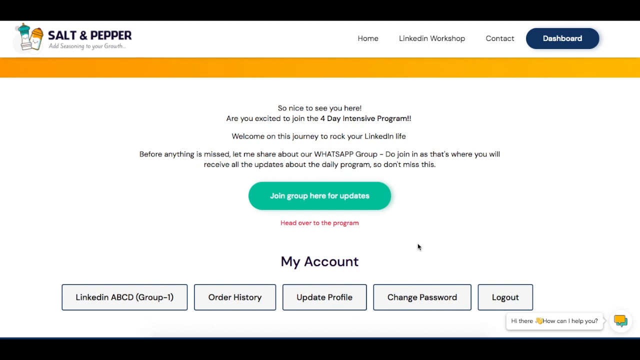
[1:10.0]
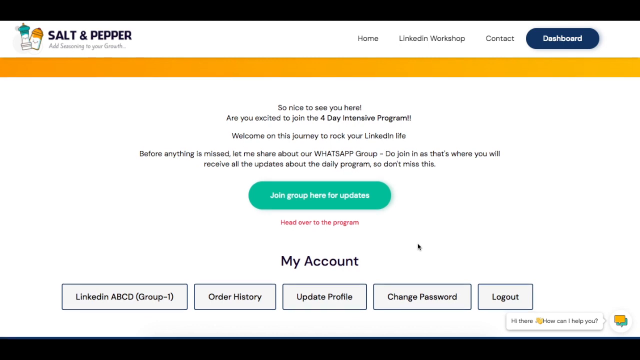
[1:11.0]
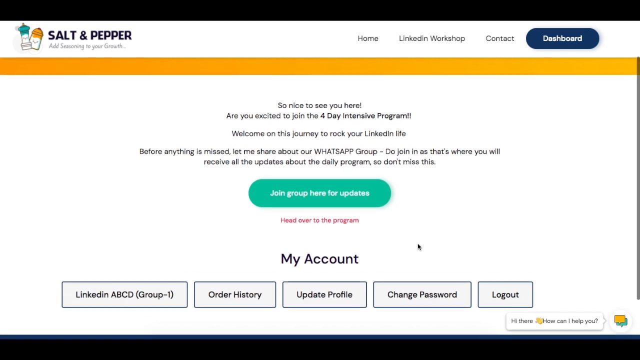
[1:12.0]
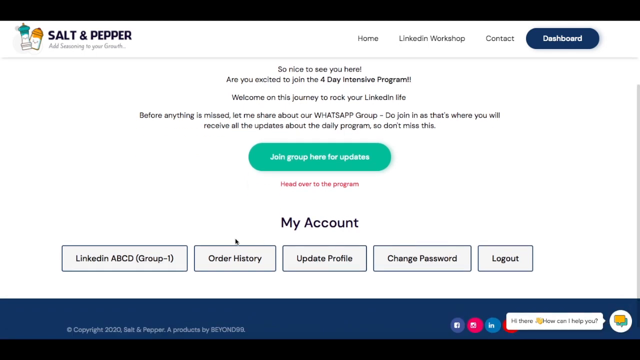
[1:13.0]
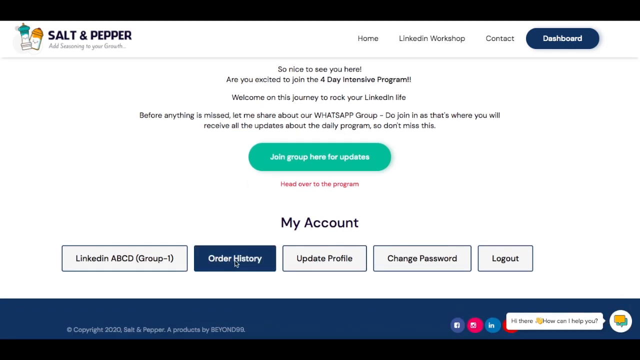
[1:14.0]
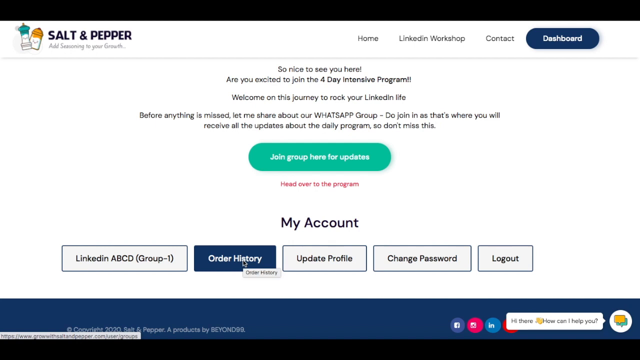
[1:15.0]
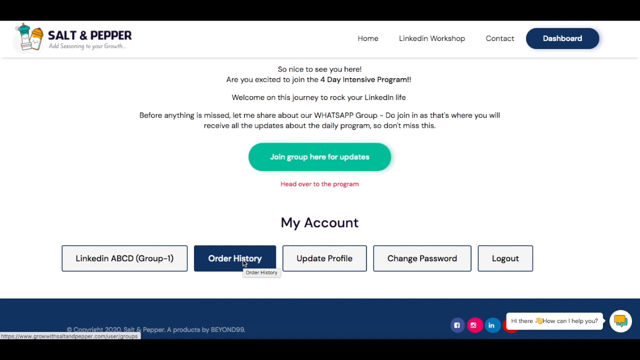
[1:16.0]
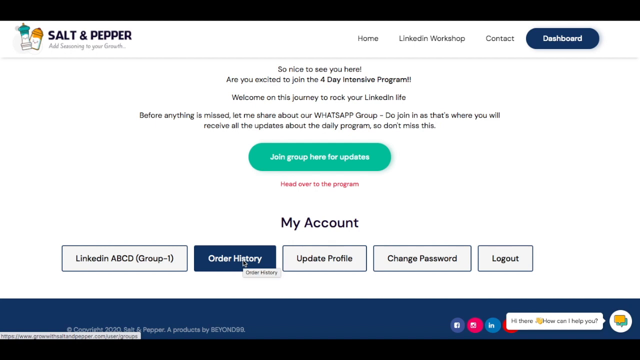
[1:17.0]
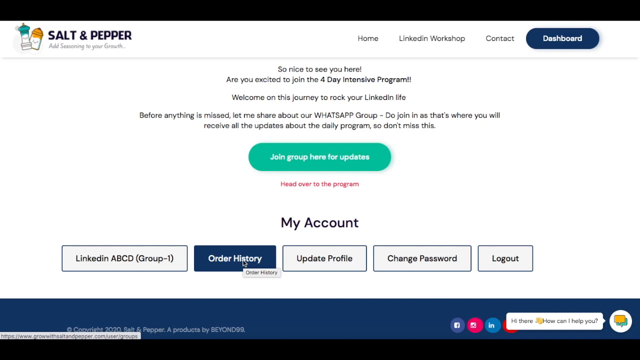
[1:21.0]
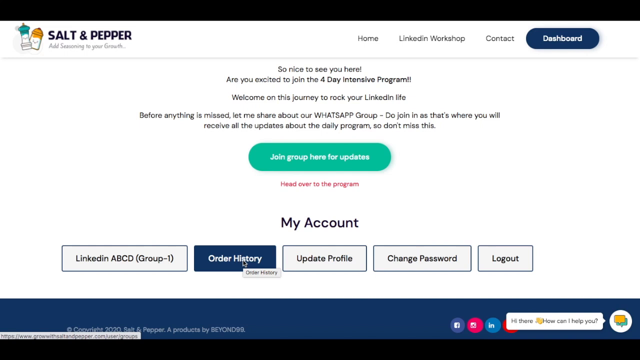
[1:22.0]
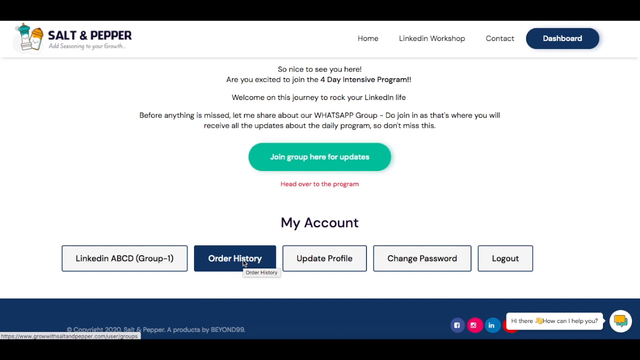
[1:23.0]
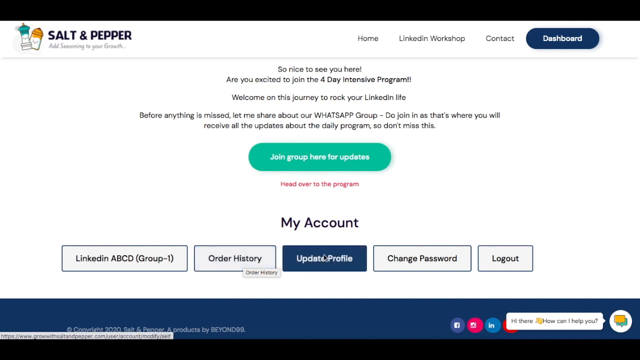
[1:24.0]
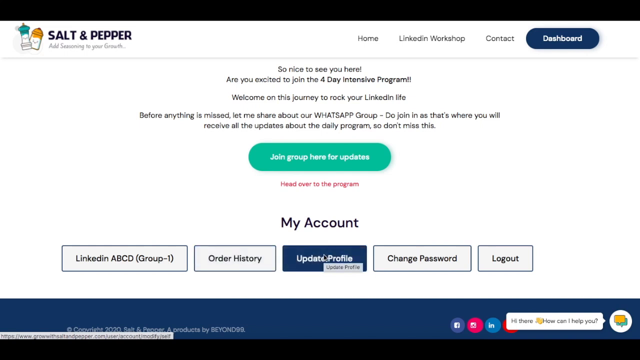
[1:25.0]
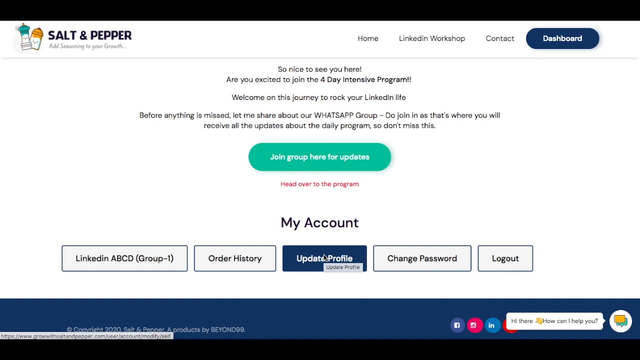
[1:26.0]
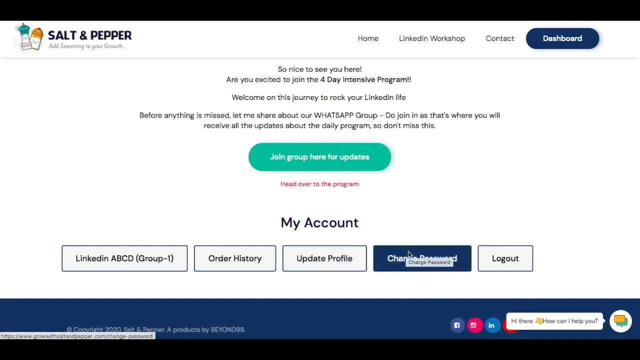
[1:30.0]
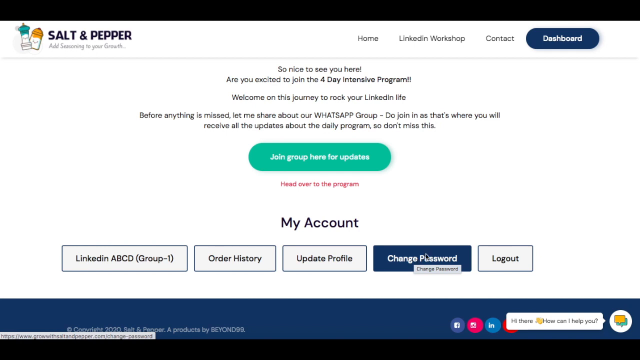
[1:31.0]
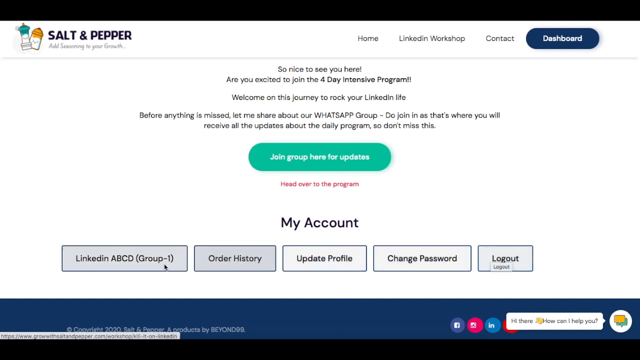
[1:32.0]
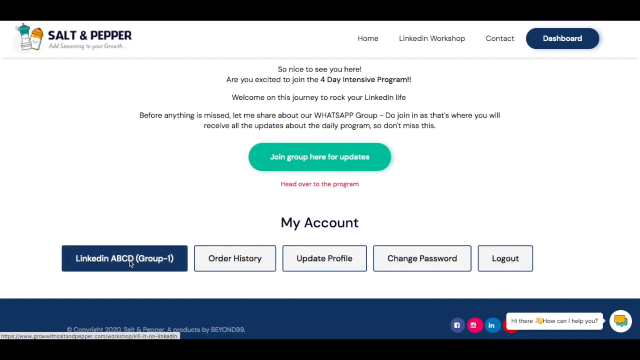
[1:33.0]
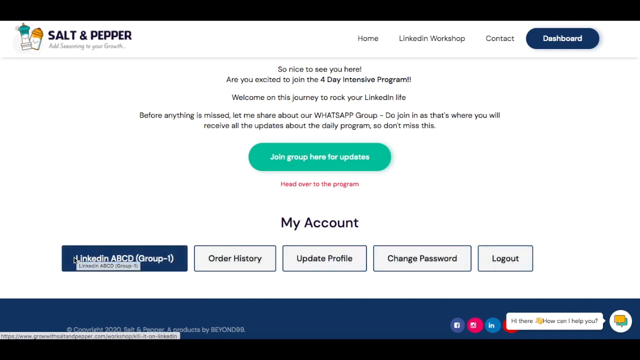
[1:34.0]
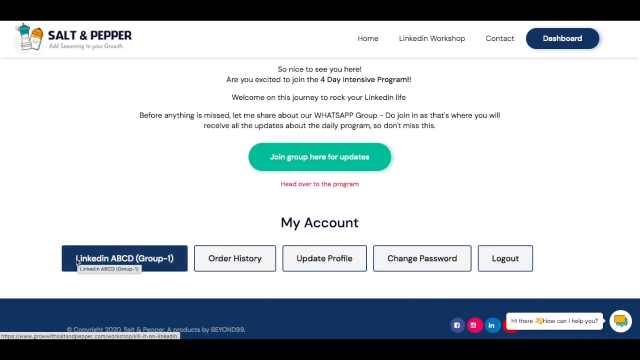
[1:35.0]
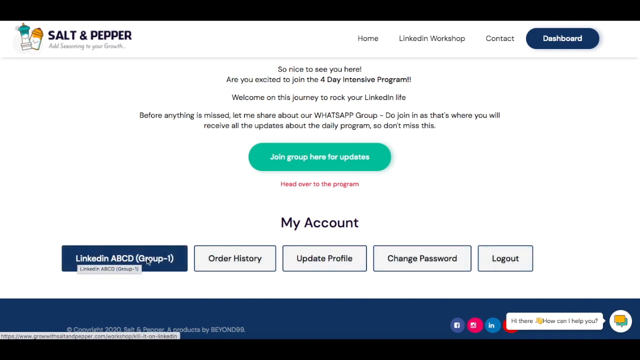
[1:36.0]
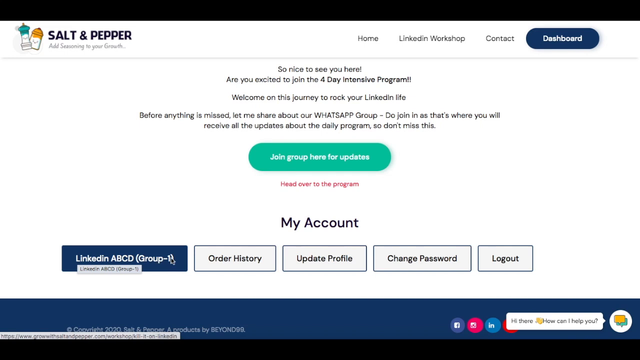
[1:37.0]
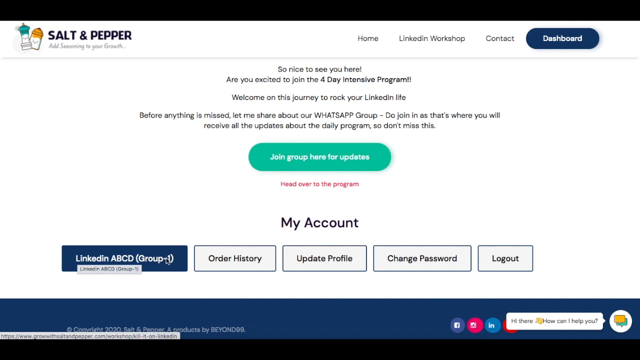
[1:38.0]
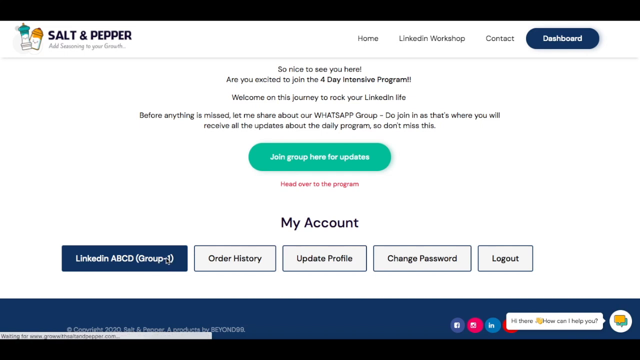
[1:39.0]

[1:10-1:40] A section toward the bottom of the dashboard page is titled "My Account." Below the title are five clickable boxes reading "LinkedIn ABCD Group 1," "Order History," "Update Profile," "Change Password," and "Log Out." The cursor lands on the Order History button, which highlights blue briefly. The cursor then moves right to the Update Profile button, highlighting it, then to the Change Password tab, then to the Log Out button, and finally back to the left, highlighting the first box, "LinkedIn ABCD Group 1." The cursor clicks the first box, which opens the landing page for the class.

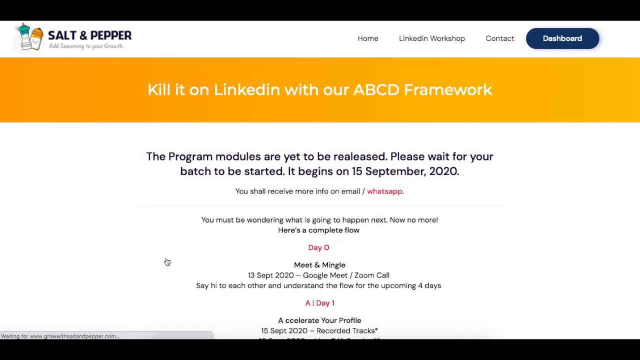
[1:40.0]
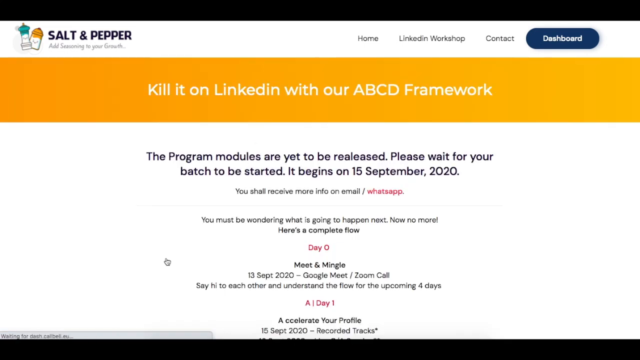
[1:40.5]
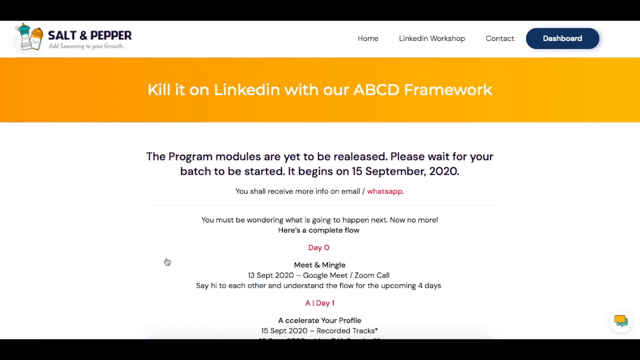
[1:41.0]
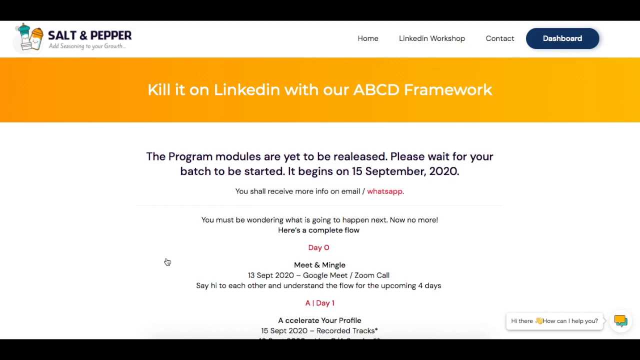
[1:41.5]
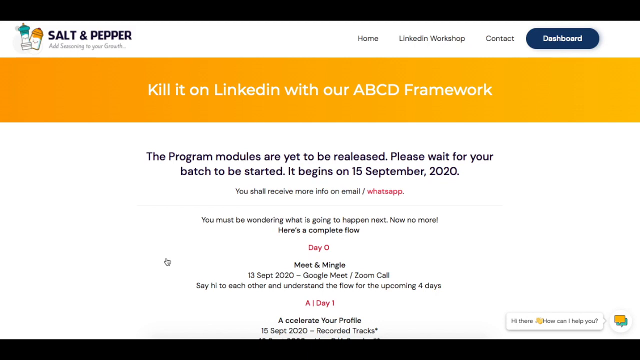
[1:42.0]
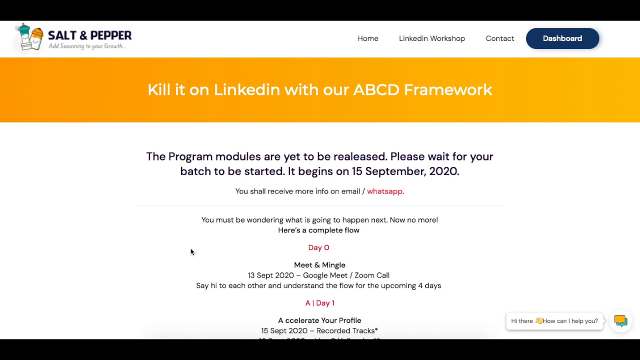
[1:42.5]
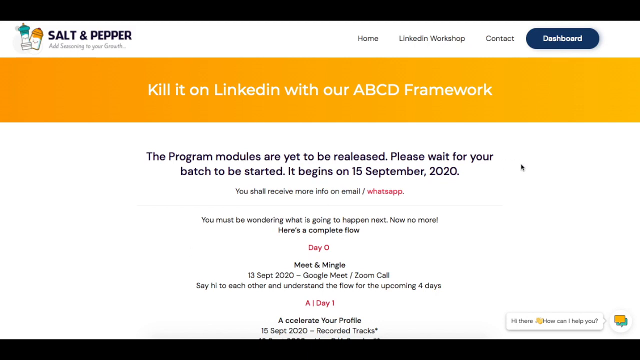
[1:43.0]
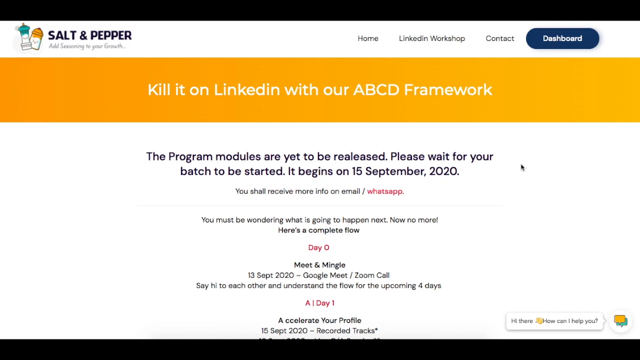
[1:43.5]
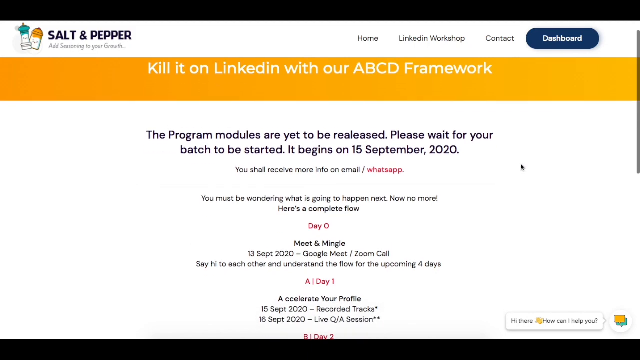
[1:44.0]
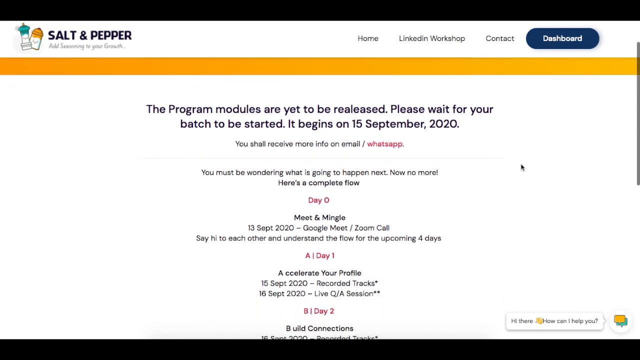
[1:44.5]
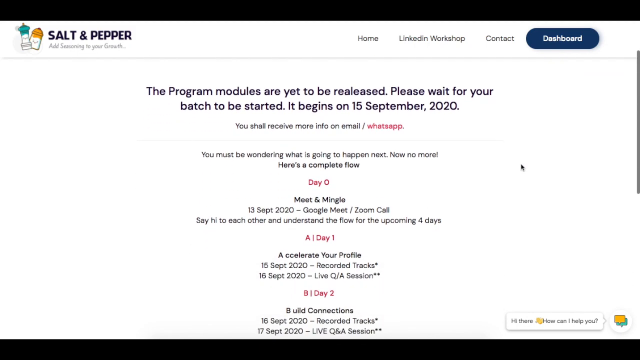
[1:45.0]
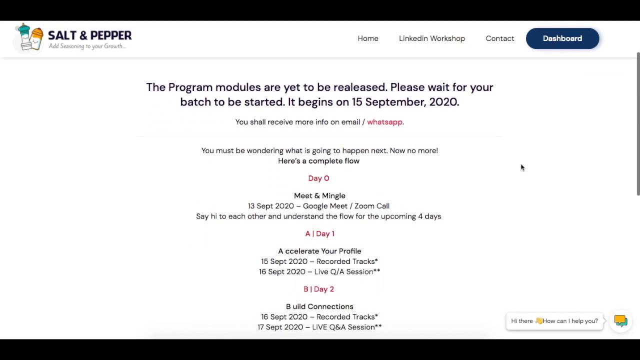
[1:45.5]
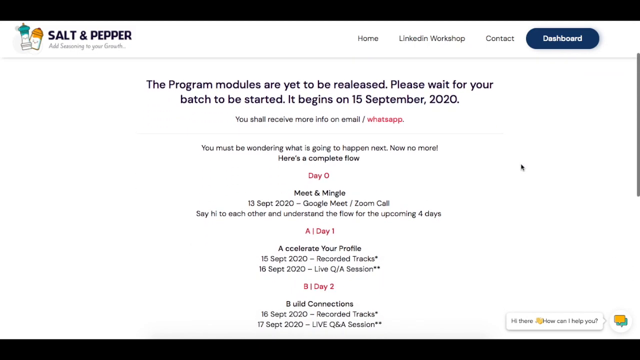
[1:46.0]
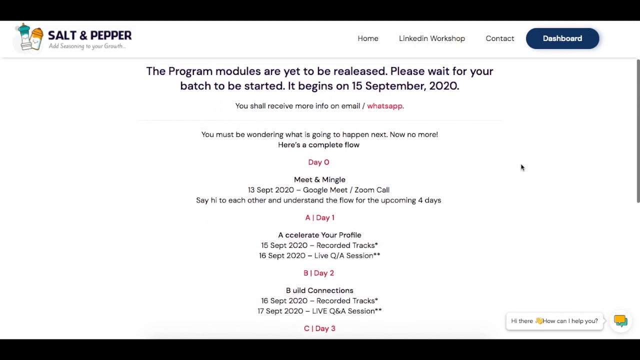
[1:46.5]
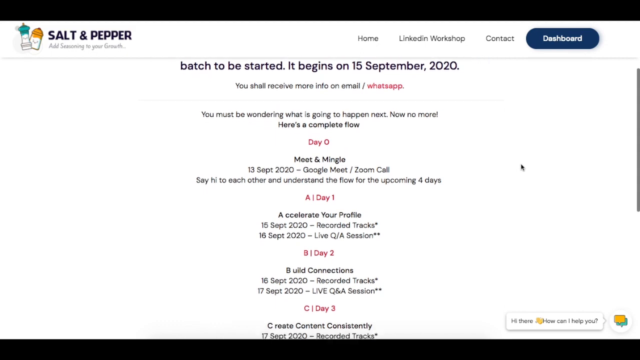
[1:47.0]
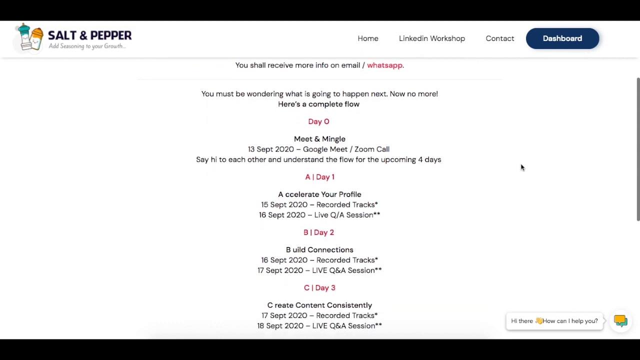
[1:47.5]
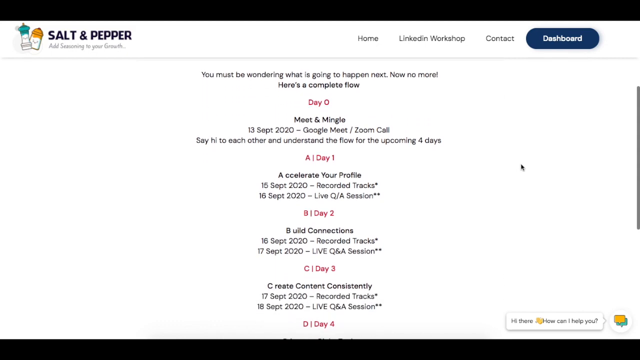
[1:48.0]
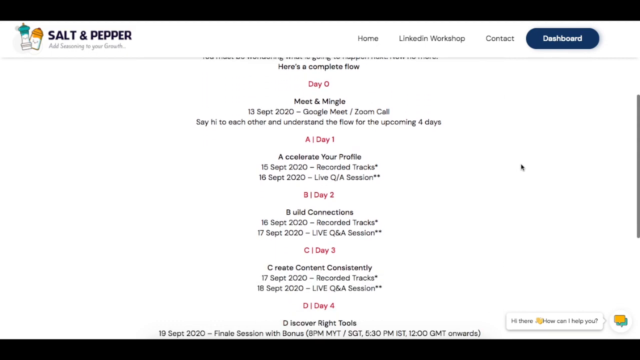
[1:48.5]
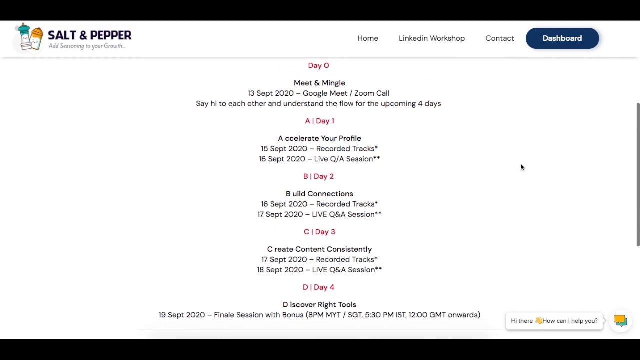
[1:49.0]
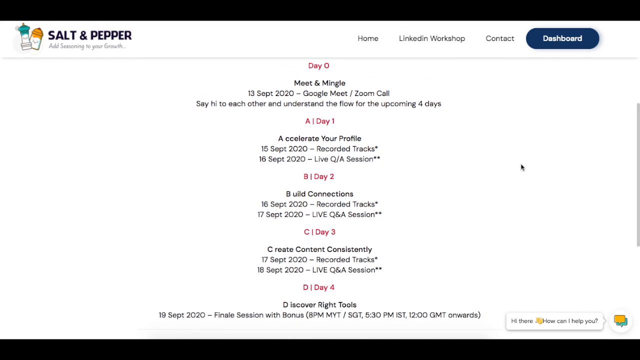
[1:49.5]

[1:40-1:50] The landing page for the Kill It on LinkedIn class schedule is shown, and the cursor scrolls the page, showing the itinerary and class schedule spanning days 1 through 4. The very top of the page reads "the program modules are yet to be released. Please wait for your batch to be started," and states that it begins on 15 September 2020. Below that is the itinerary: day zero is a meet and mingle session on Google Meet; day one is learning to accelerate their profile, with two classes; day two is learning to build connections, also two courses; day three is learning to create consistency, also two classes; and day four, titled "Discover the Right Tools," is on September 19th, 2020, and is the finale session.